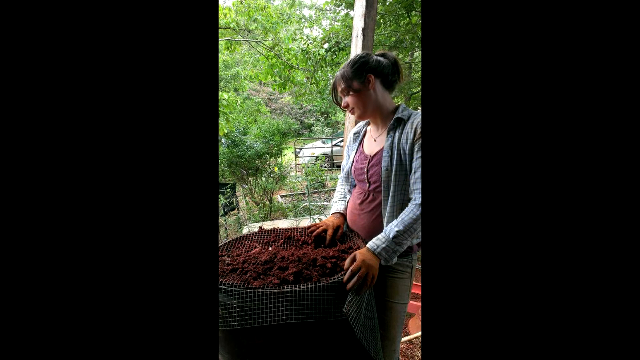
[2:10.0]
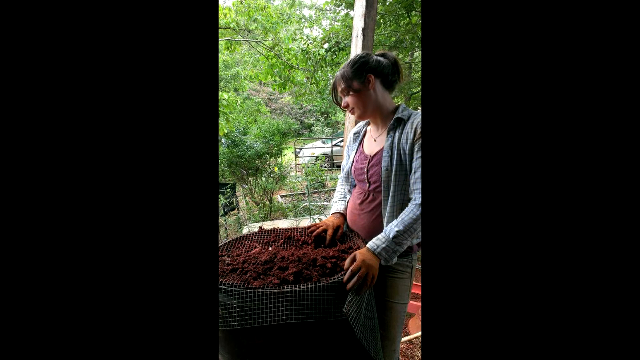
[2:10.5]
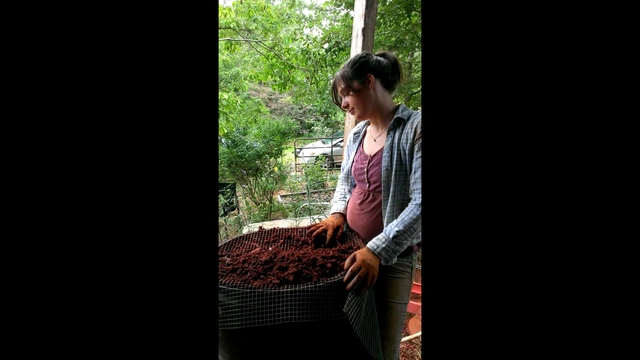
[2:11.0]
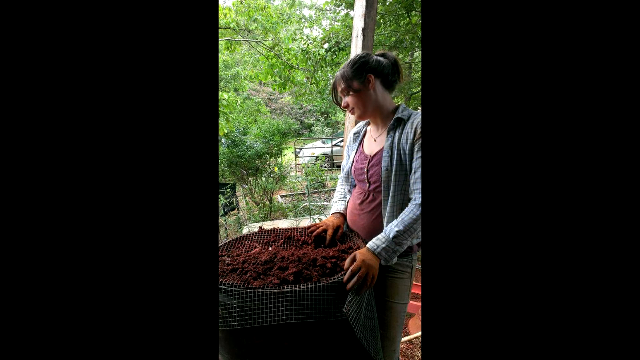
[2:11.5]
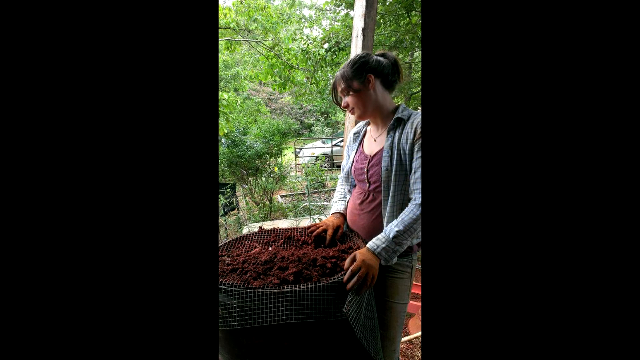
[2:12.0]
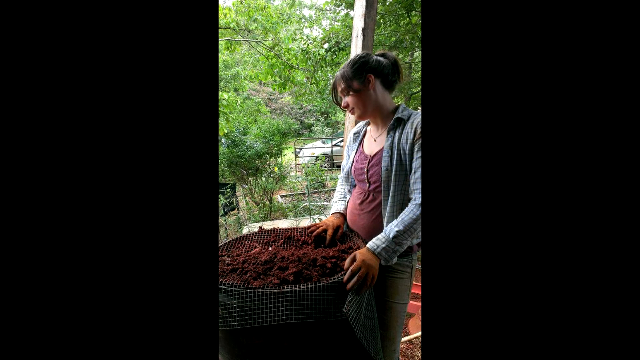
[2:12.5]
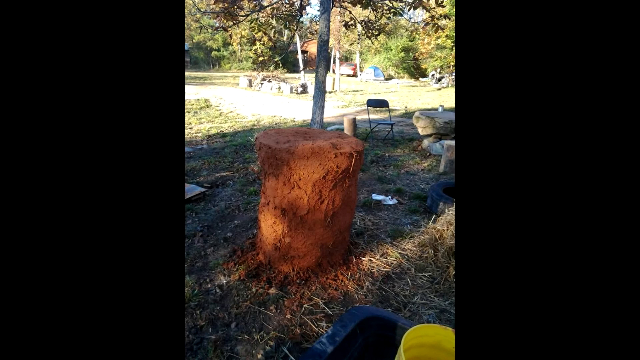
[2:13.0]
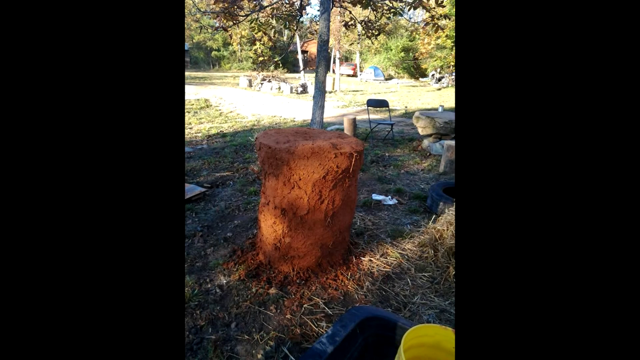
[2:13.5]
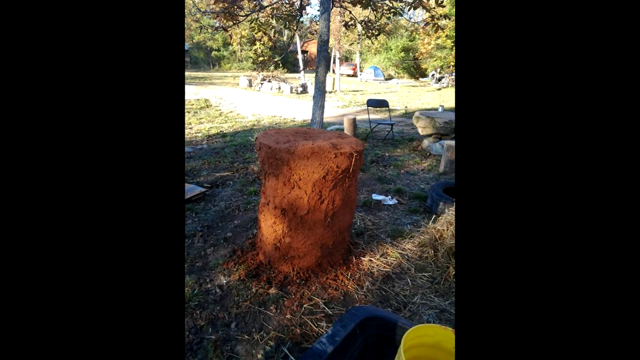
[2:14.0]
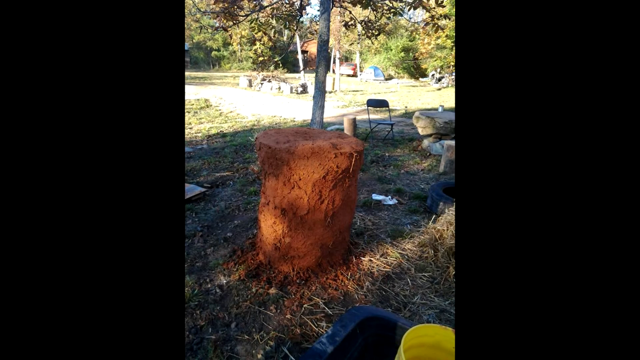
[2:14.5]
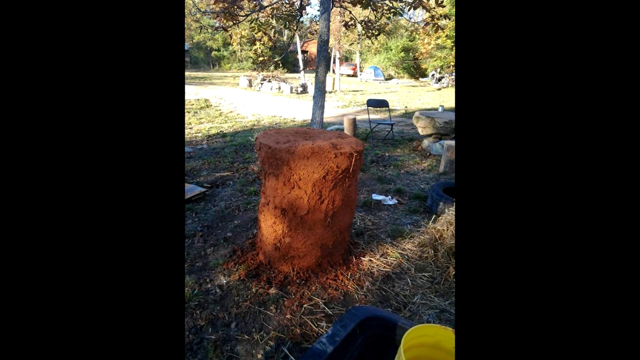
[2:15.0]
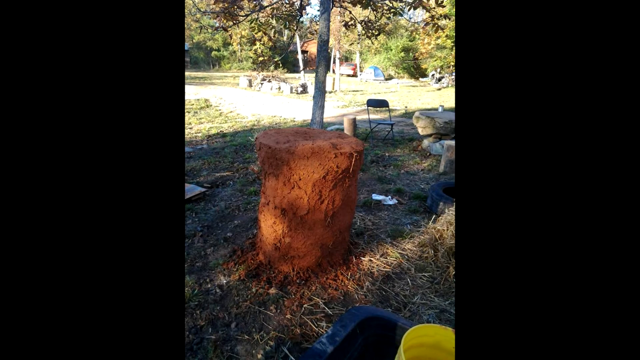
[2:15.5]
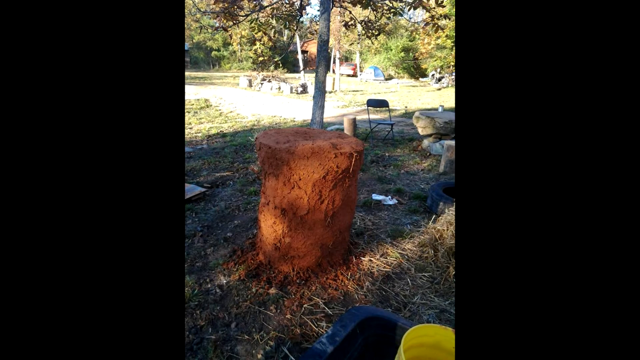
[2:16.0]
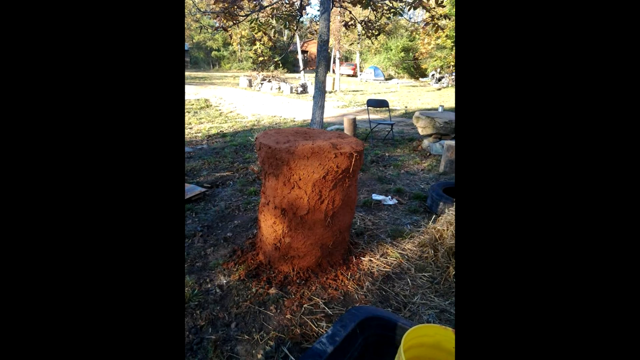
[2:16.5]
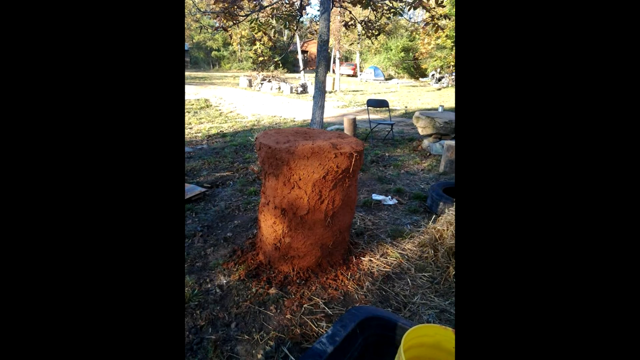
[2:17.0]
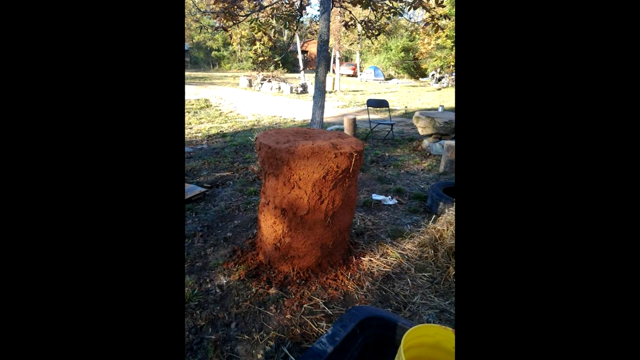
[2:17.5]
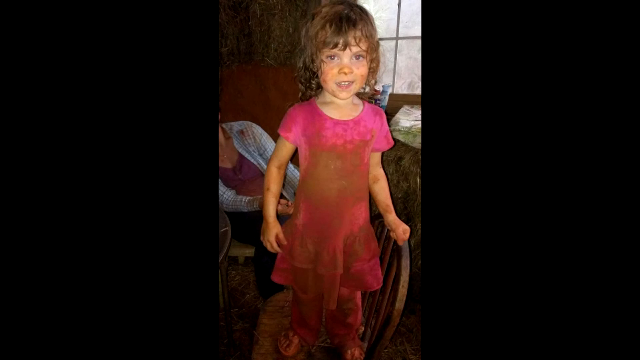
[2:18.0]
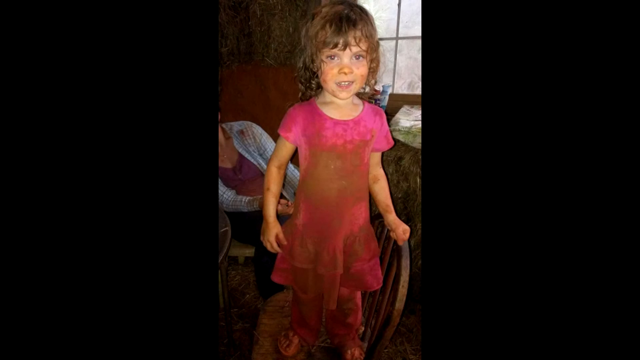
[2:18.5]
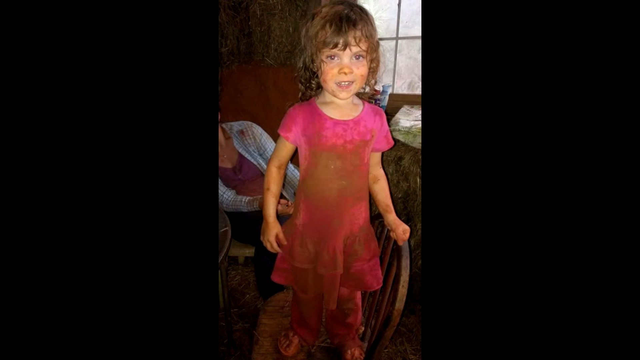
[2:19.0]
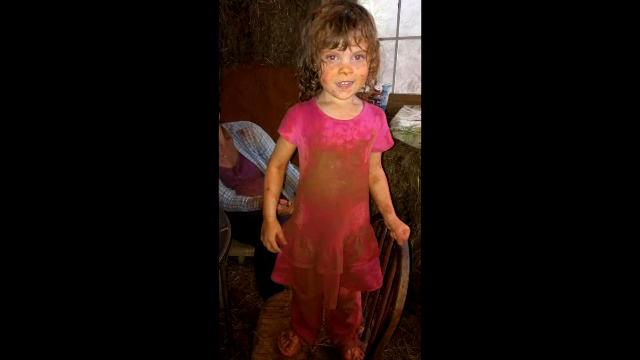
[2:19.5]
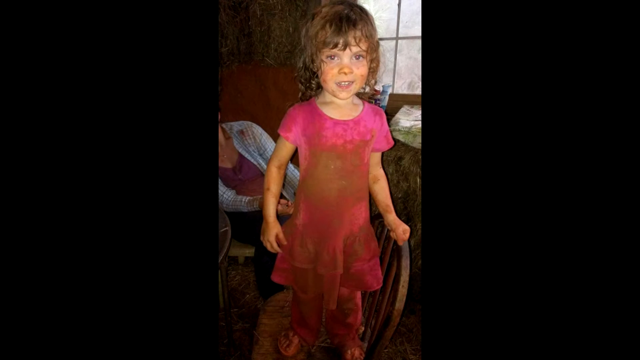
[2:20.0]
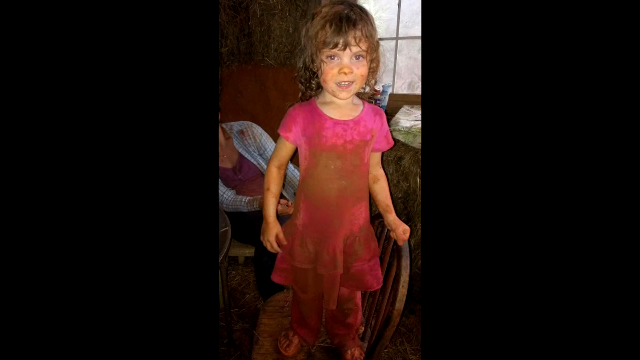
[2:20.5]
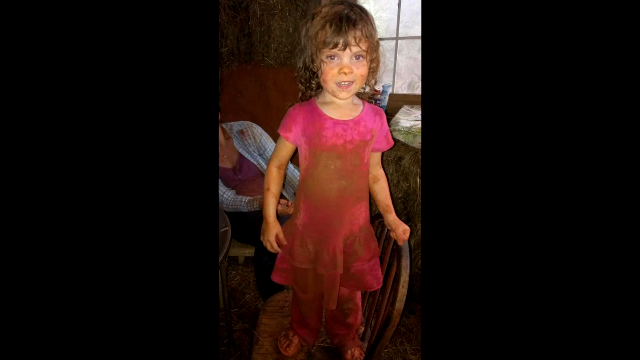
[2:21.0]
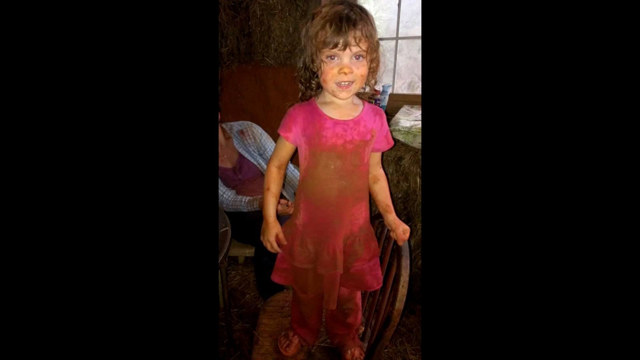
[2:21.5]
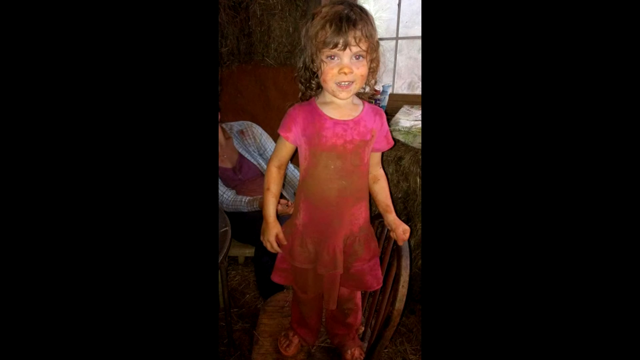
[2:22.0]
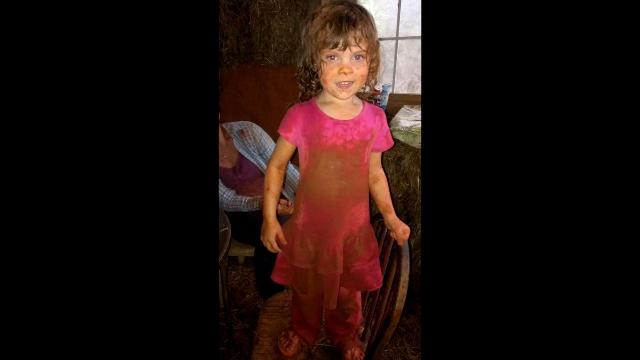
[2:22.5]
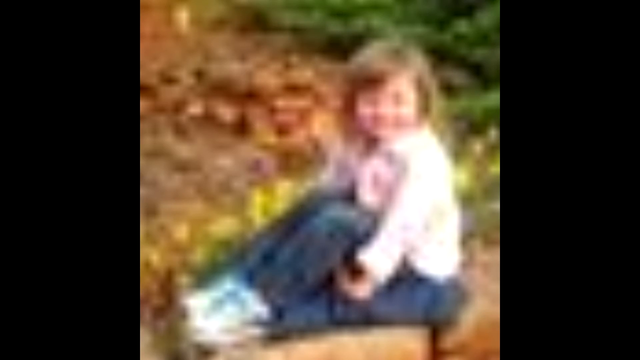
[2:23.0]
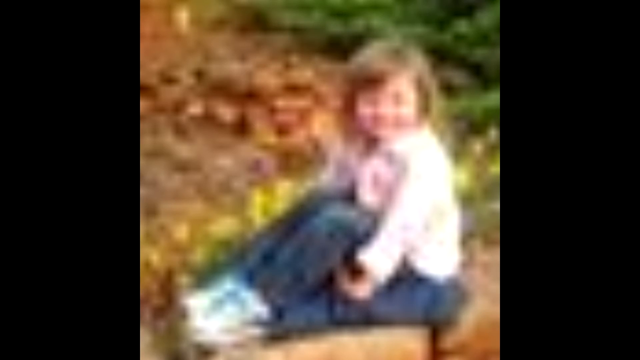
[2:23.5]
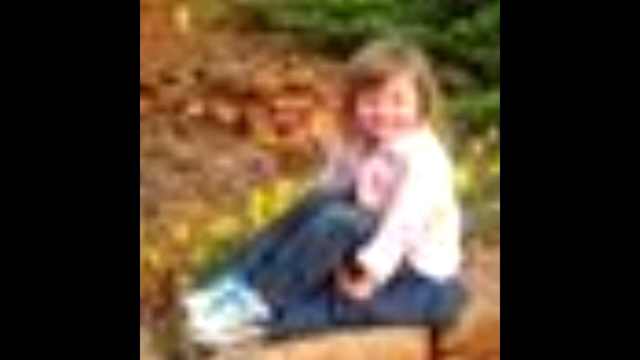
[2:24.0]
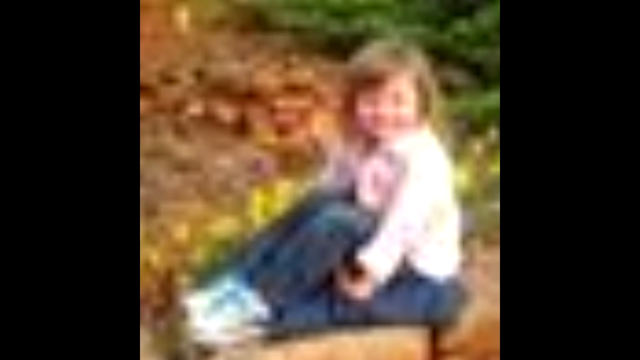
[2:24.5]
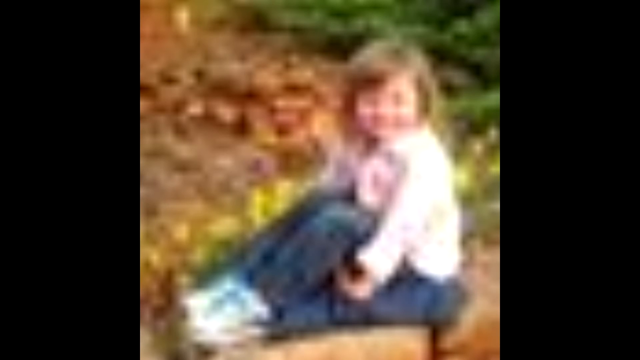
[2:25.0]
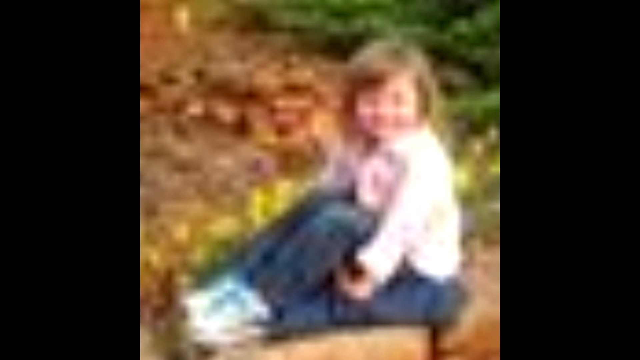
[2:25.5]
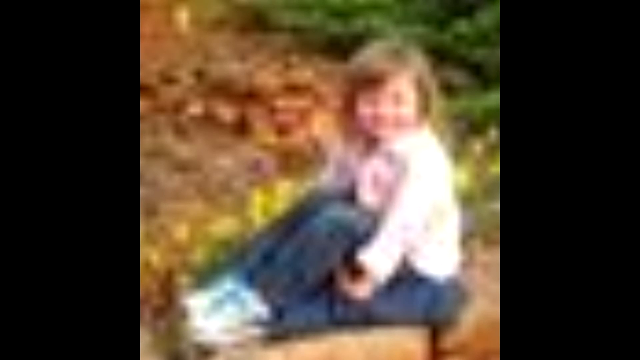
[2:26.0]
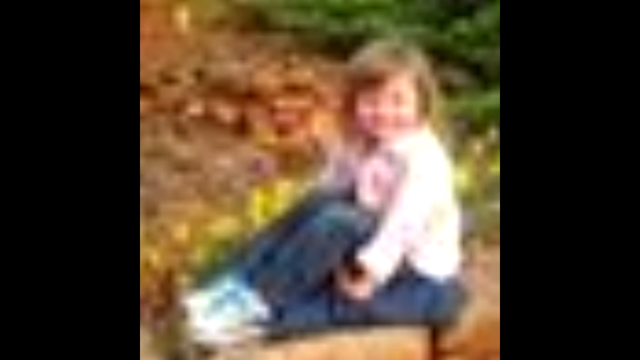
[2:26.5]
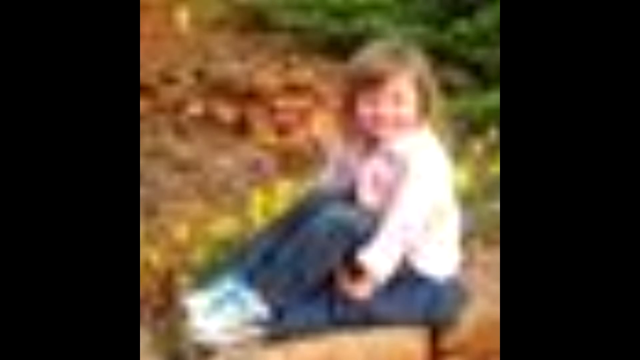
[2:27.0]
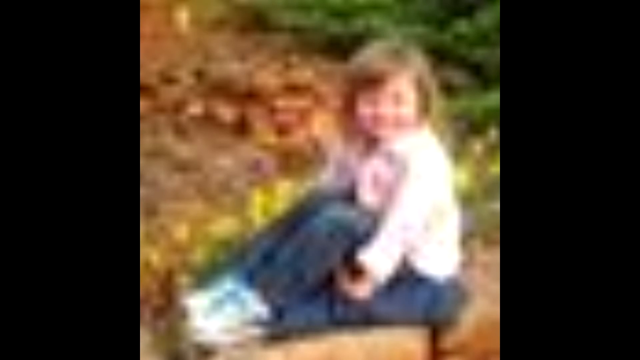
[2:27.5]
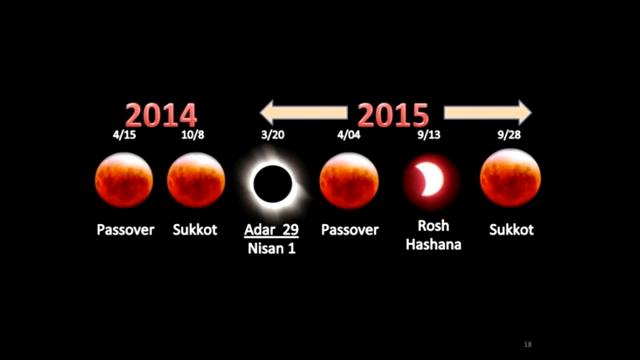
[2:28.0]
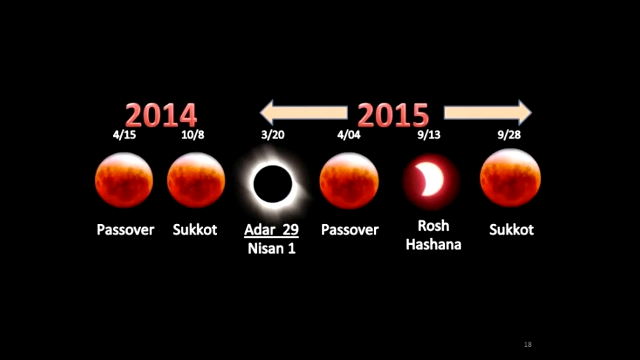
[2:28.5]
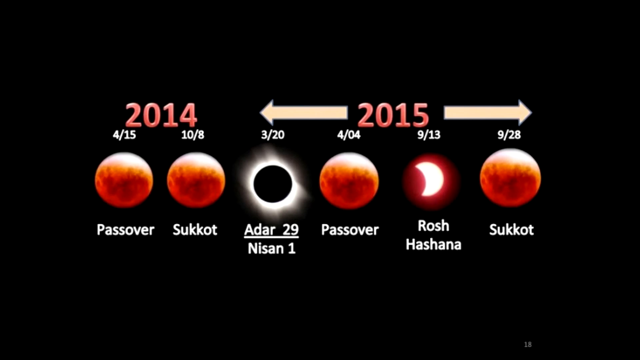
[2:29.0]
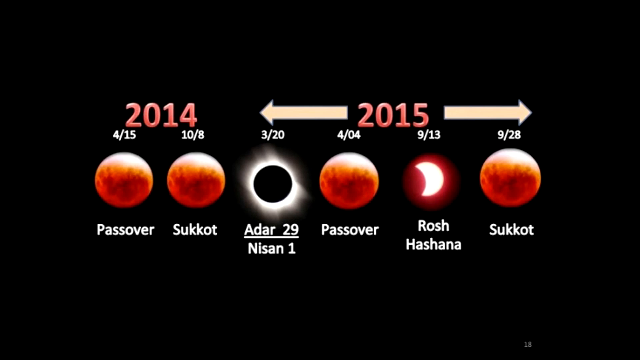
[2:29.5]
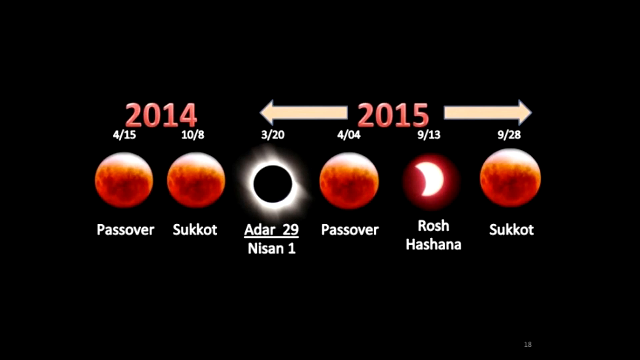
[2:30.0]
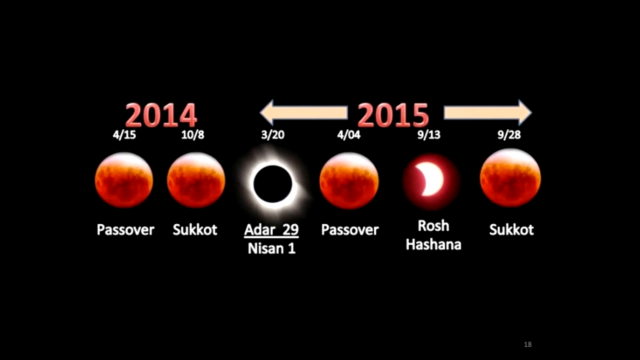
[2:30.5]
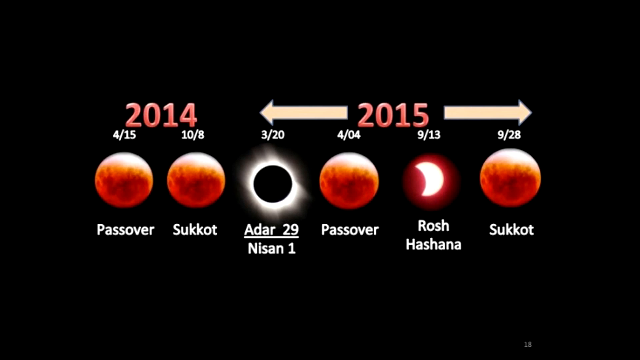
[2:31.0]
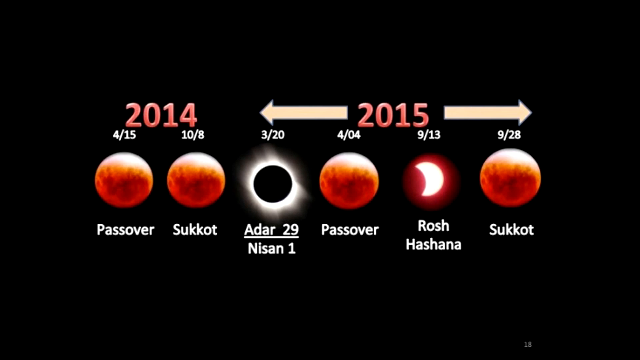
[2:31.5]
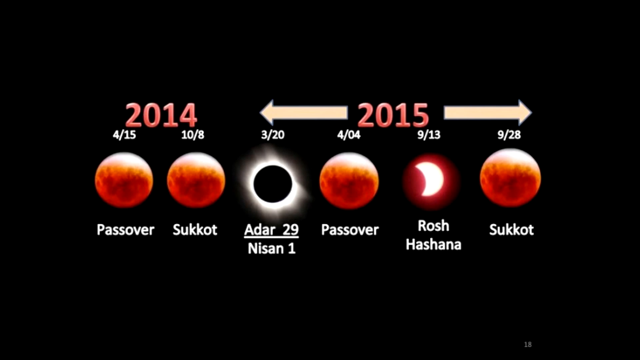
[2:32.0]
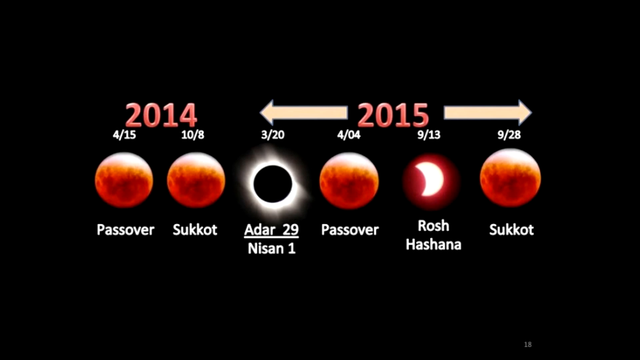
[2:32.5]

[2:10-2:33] A woman wearing orange or dirty brown gloves seems to be making what looks like clay mud, holding what looks like the equipment she uses, with what looks like wood mud on top. In the background, a bunch of trees surround what looks like the balcony she is standing on. A shot shows what looks like a gold car. The woman wears a pink top with a blue top over it and green pants. What looks like a mud drum is on what looks like the ground. A shot shows a tree, a chair on the right-hand side, and what looks like a rock table with a cup on top of it, with another car and a blue tent on the right-hand side in the background. A child in a pink dress is dirty with mud, her hair is wet, and there is mud next to her. A very blurry image shows a little girl sitting on the floor. A shot follows with dates from 2014 to 2015 and on-screen text such as "Passover", "Sukkot", "Adai 29" and "Nisan 1 Passover", followed by pictures of mud.